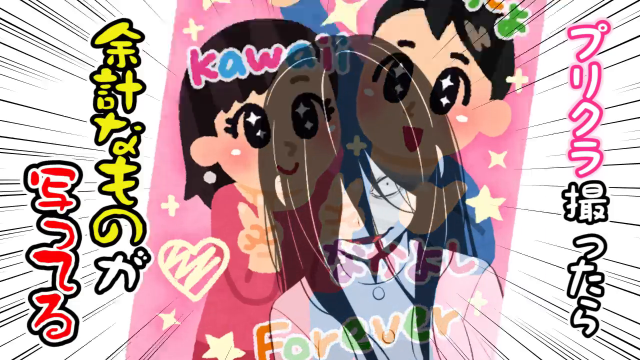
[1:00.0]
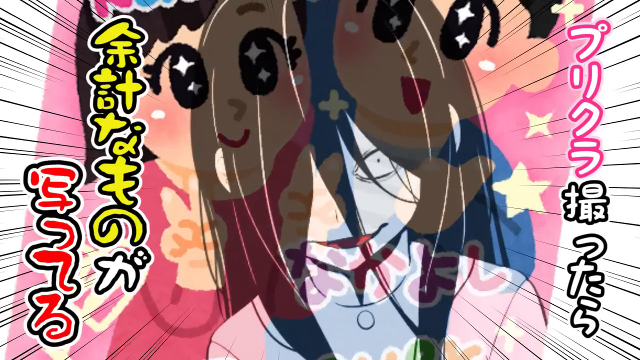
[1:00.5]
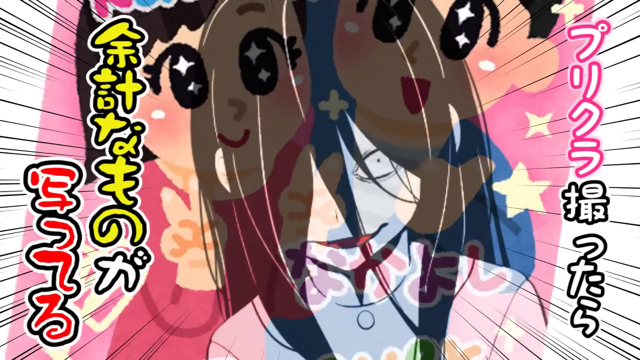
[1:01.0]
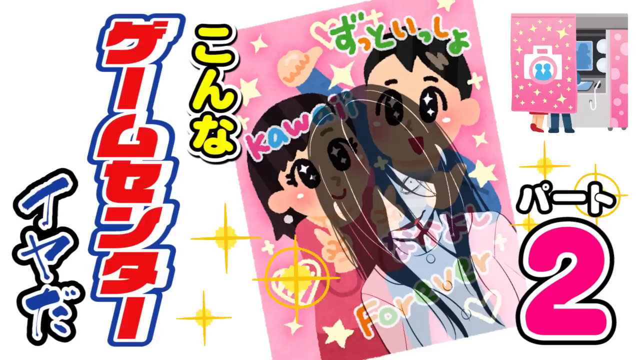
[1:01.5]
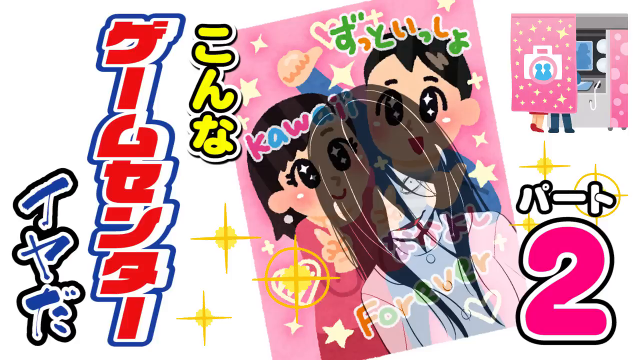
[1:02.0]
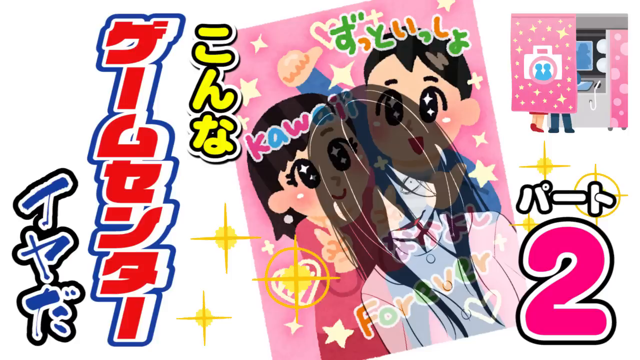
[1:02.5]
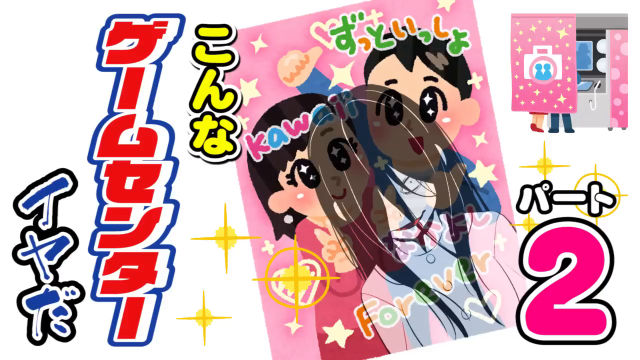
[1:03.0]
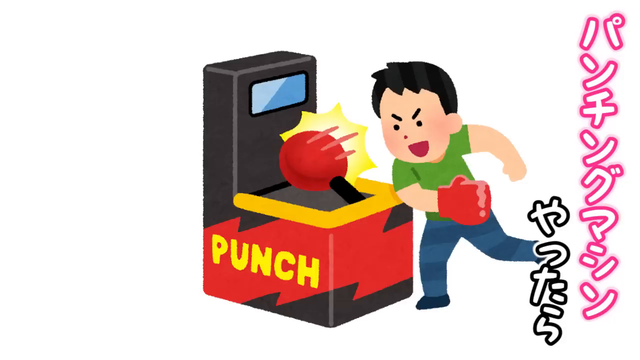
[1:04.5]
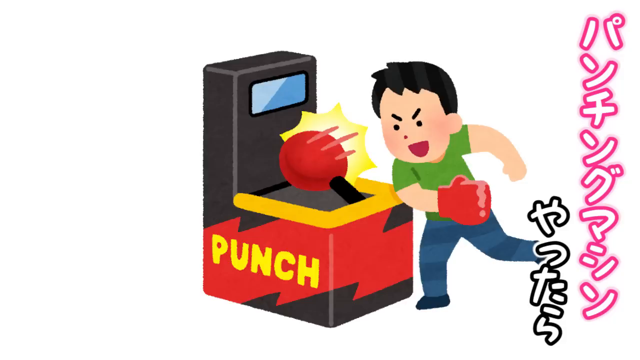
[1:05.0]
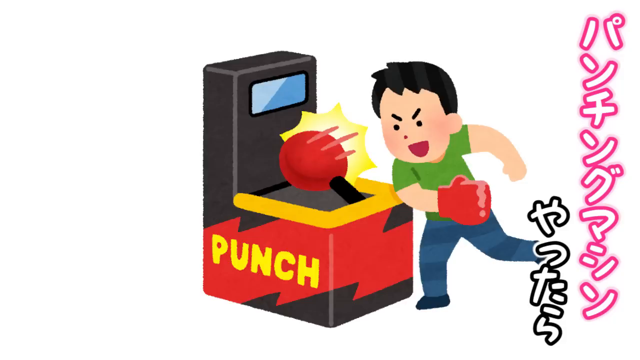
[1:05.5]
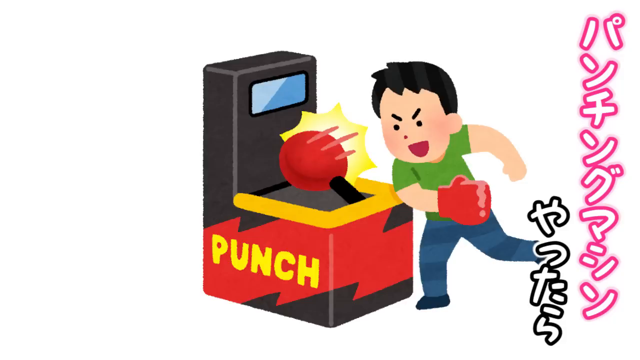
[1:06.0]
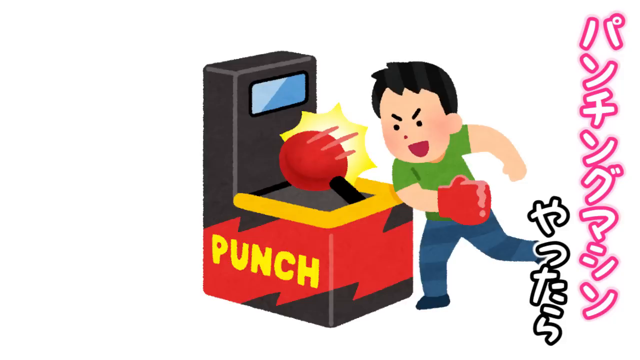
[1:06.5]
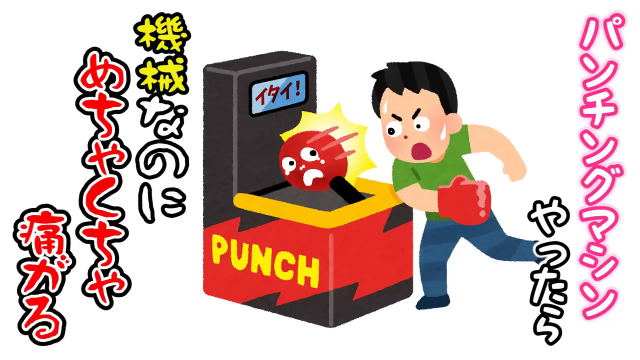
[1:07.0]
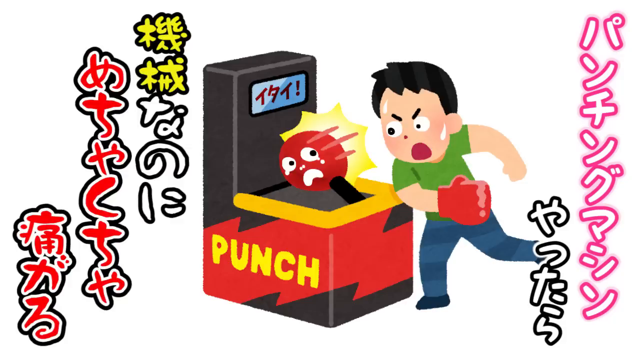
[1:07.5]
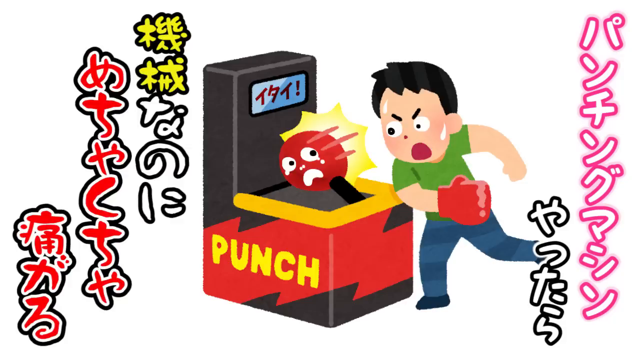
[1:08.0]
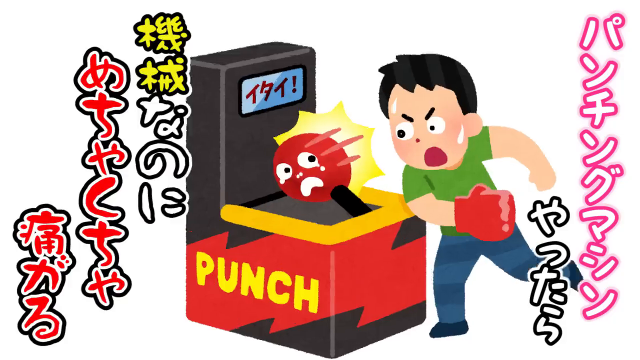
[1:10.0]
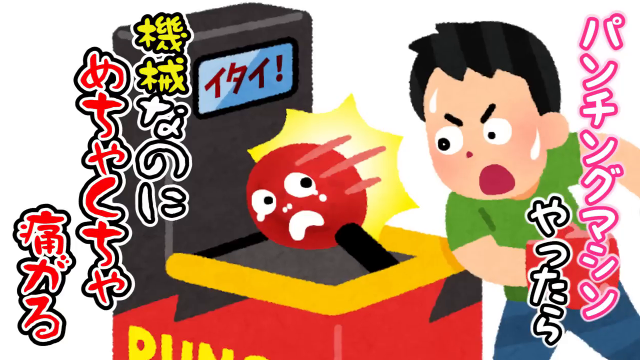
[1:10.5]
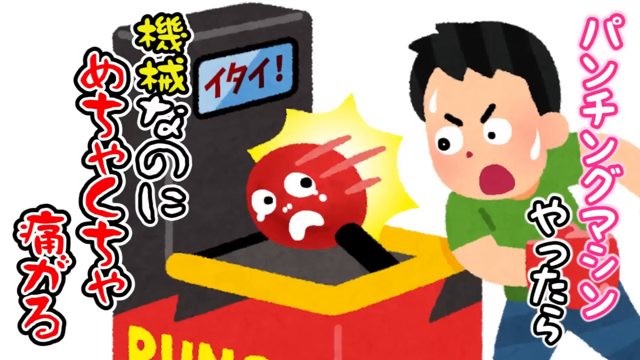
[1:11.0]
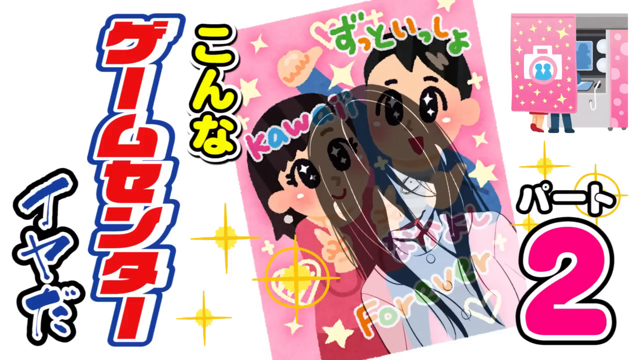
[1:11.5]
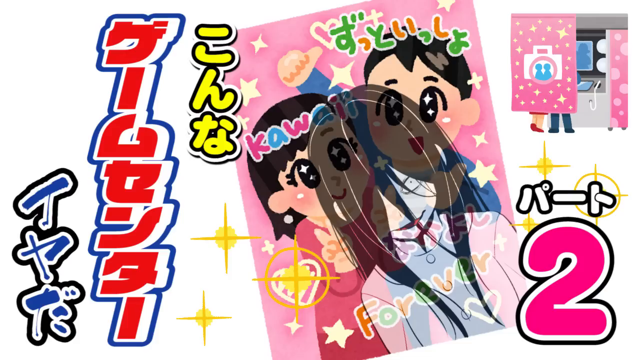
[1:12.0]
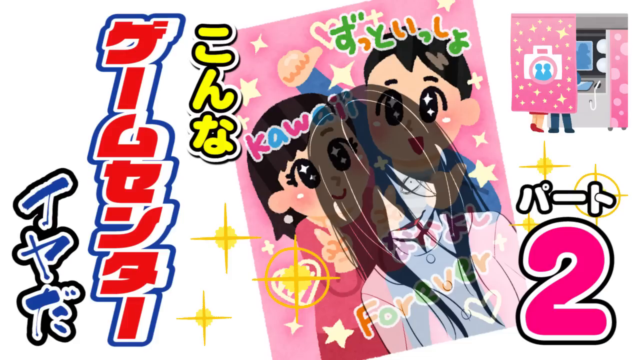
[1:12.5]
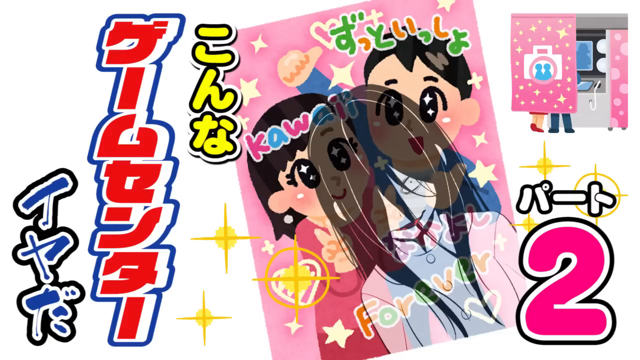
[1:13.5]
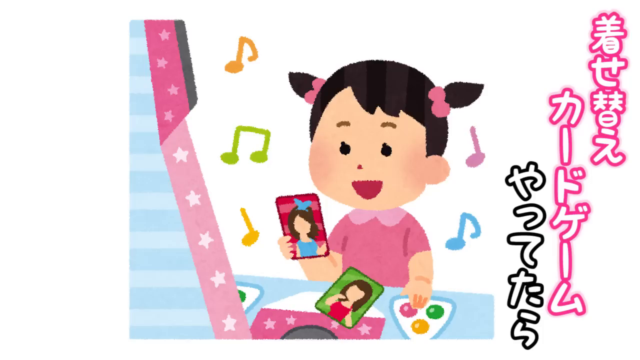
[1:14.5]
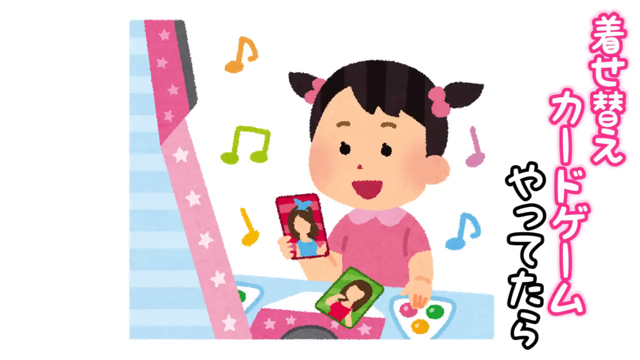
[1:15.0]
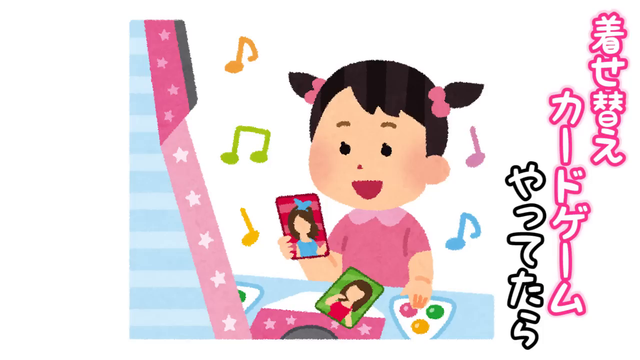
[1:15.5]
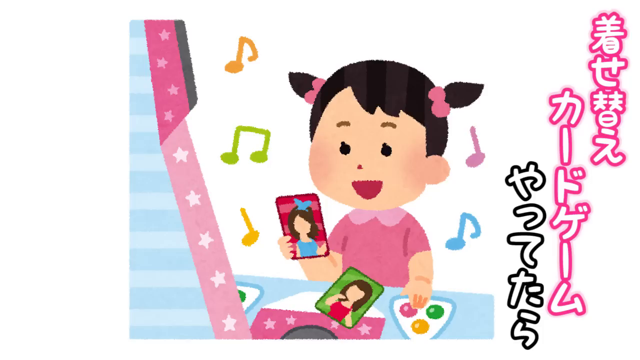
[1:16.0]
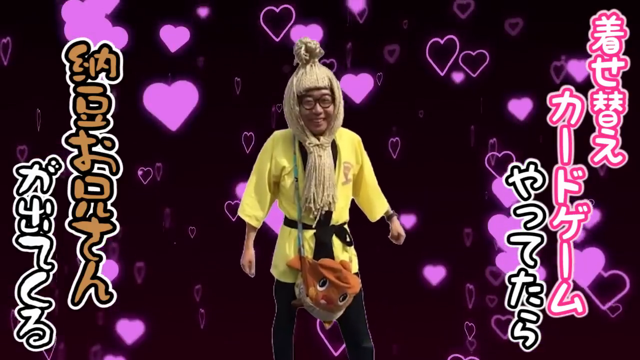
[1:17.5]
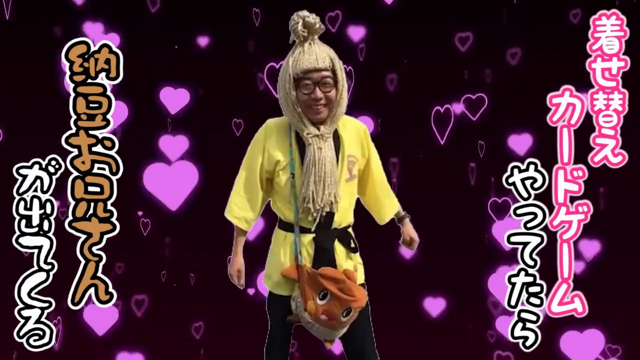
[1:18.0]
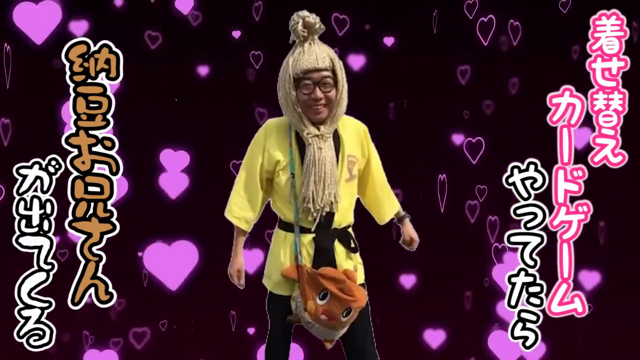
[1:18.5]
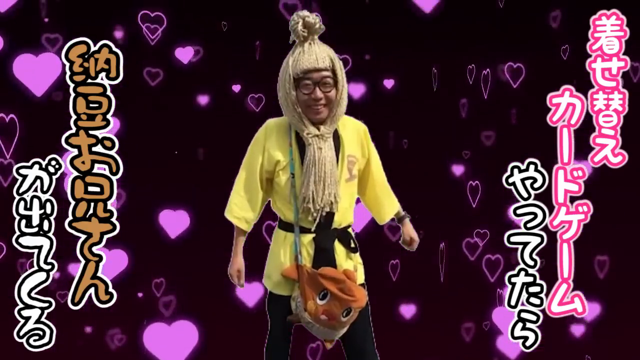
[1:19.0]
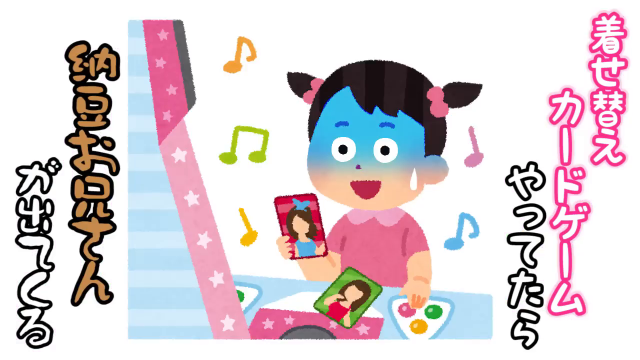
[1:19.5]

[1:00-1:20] The drawing shows the woman looking very intense, with a crazy eye visible through draped hair; she is possibly meant to represent an ex-girlfriend. The man, this time in a green shirt and blue jeans, plays a punching arcade game with a black body, a red punching bag and "punch" in big yellow letters along the left-hand side. He looks kind of angry at the punching bag, which now has a frightened cartoon face on it, with more Japanese lettering on both sides. It cuts to the poster with a two, this time with the scary-looking woman in front of it. Then a little girl appears with two pigtails held by pink hair bows or ponytail holders, wearing a pink shirt, with musical notes around her head. She is either playing a game or has trading cards in front of her: a red card with a woman in a blue dress and a green card with a red dress. She appears to be holding 3D goggles in one hand. The poster is shown again, and the view zooms toward the center on the woman with the crazy hair, drawn in black and white with one crazy eye and a crazy smile.